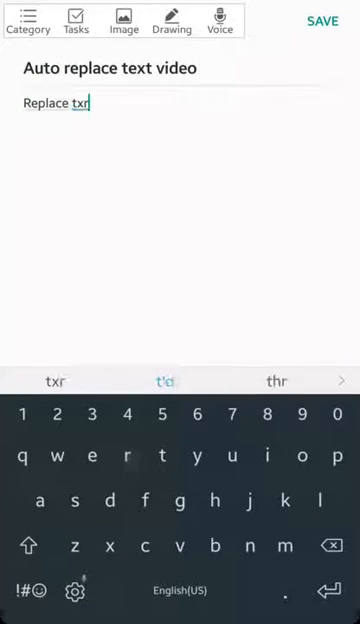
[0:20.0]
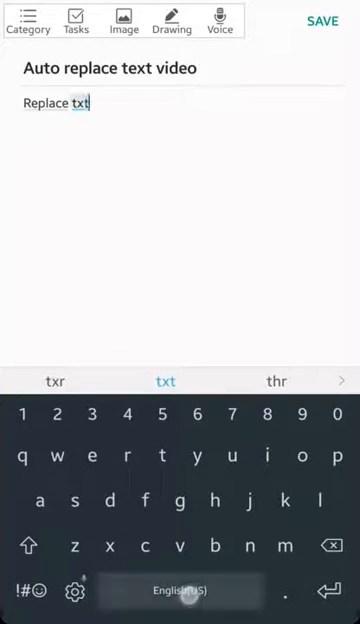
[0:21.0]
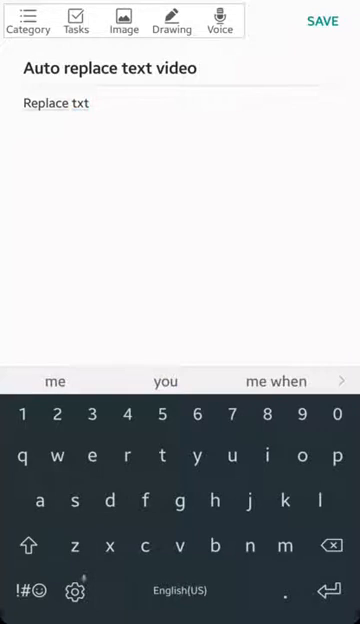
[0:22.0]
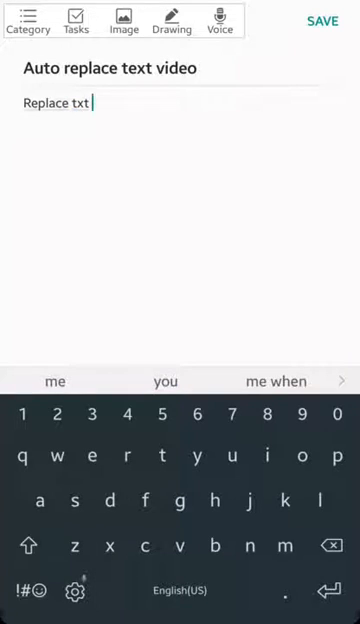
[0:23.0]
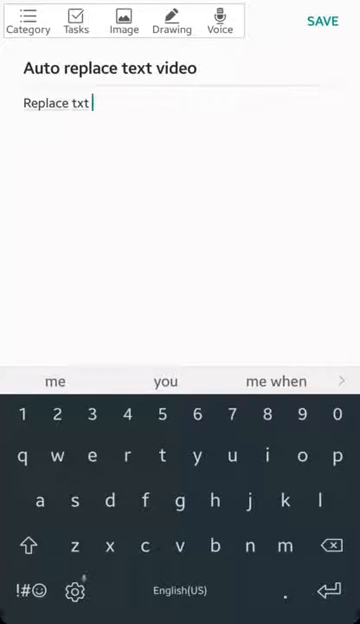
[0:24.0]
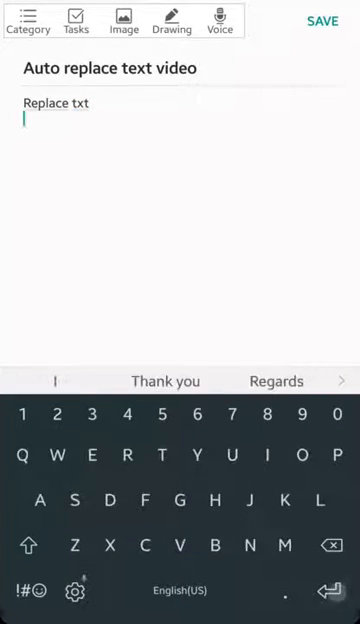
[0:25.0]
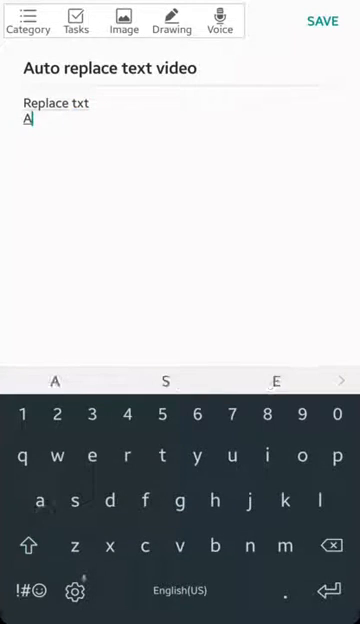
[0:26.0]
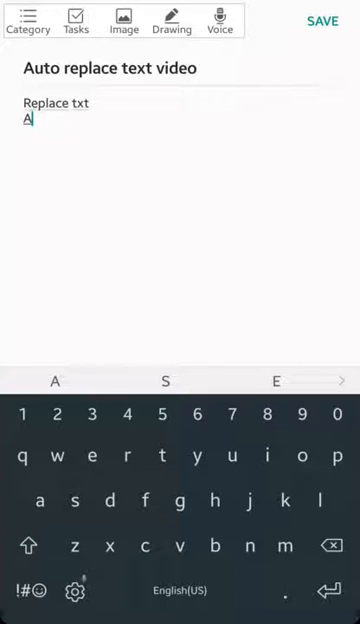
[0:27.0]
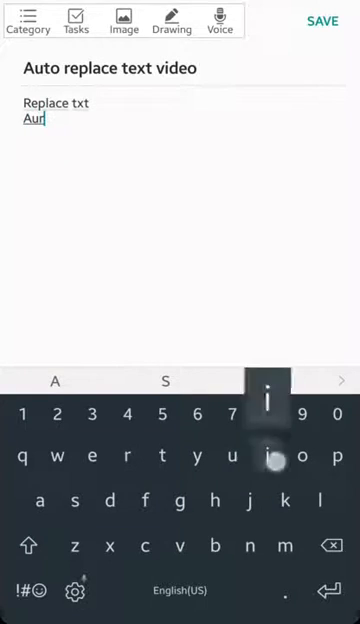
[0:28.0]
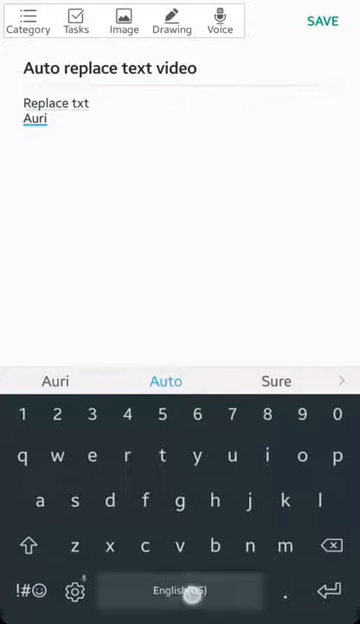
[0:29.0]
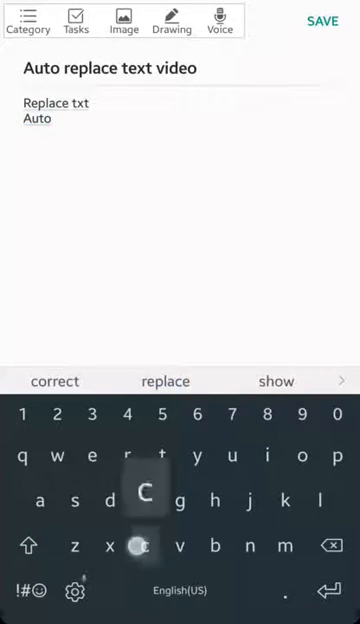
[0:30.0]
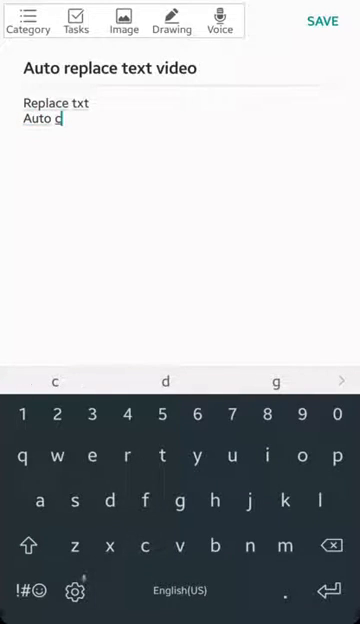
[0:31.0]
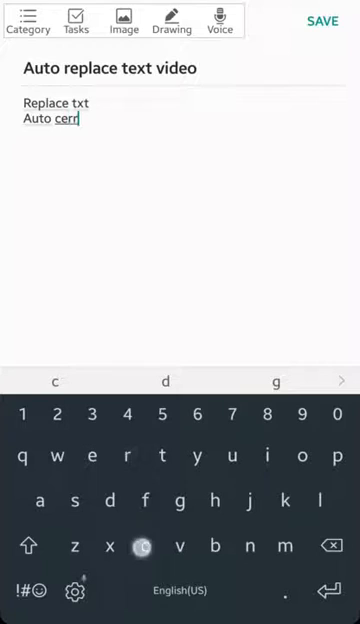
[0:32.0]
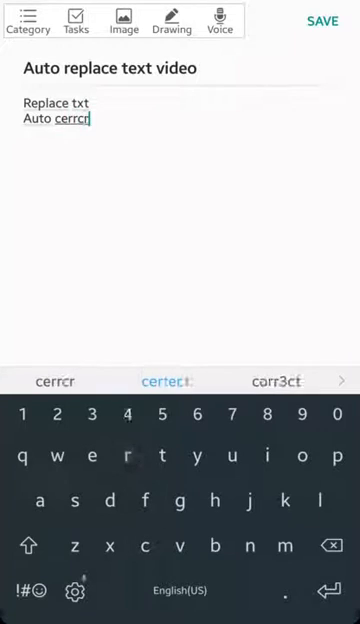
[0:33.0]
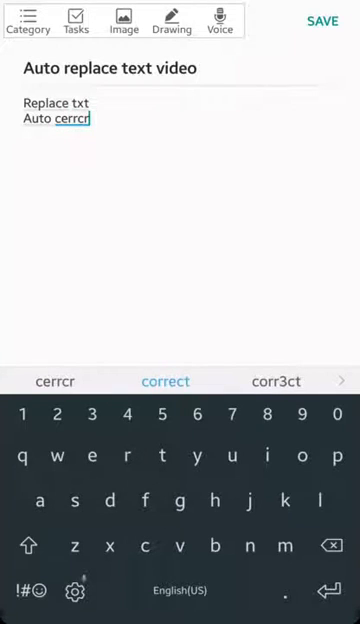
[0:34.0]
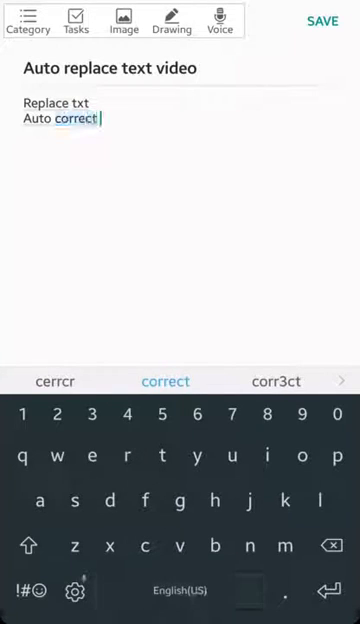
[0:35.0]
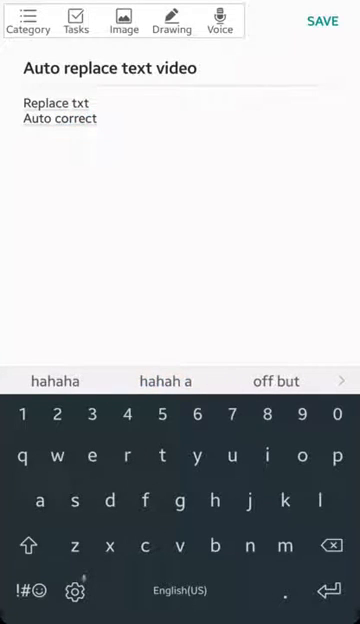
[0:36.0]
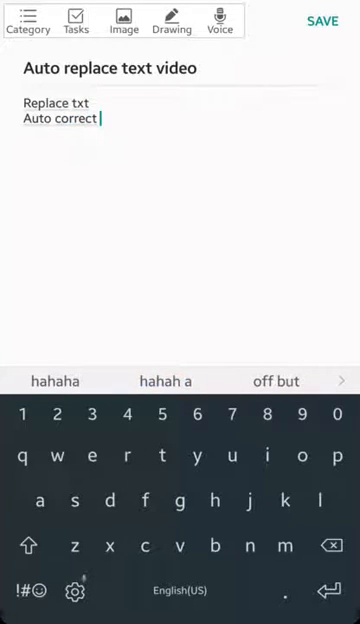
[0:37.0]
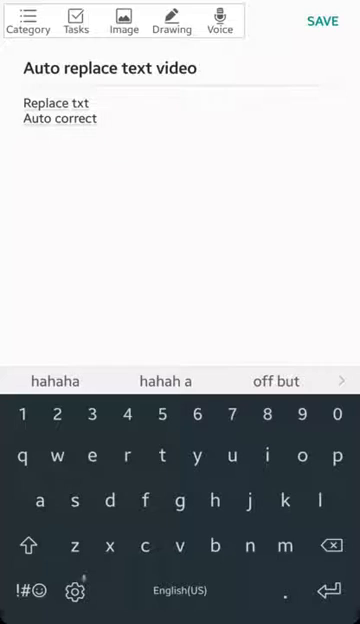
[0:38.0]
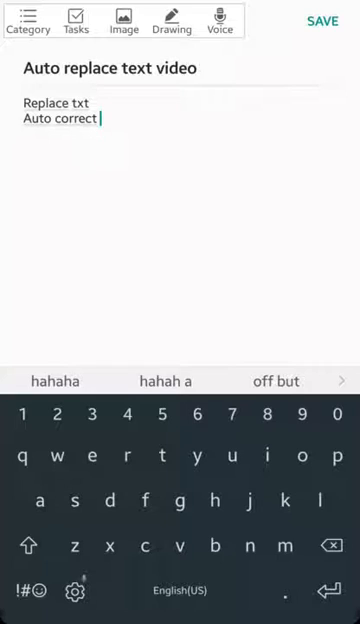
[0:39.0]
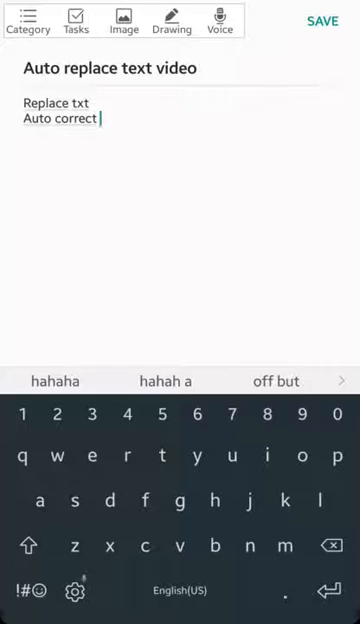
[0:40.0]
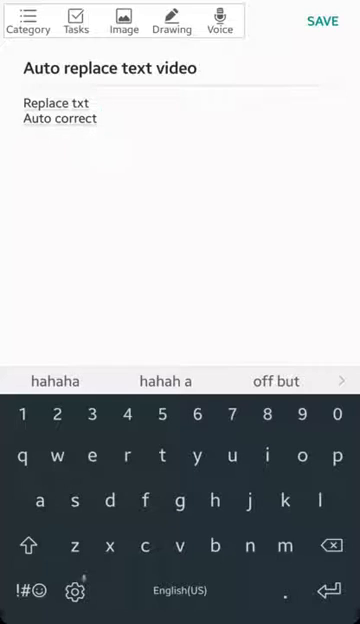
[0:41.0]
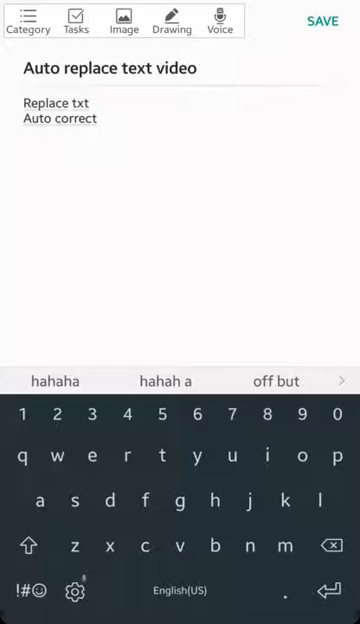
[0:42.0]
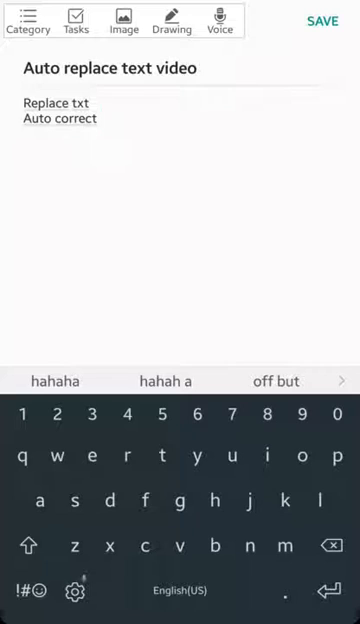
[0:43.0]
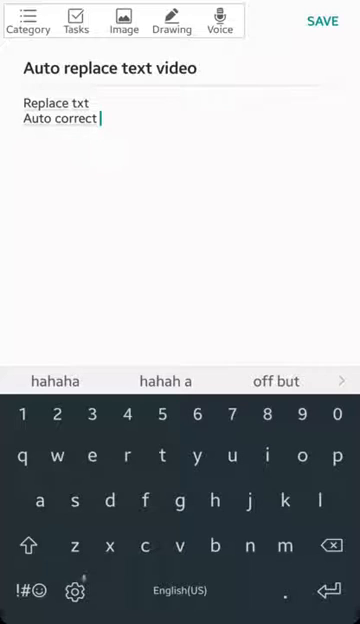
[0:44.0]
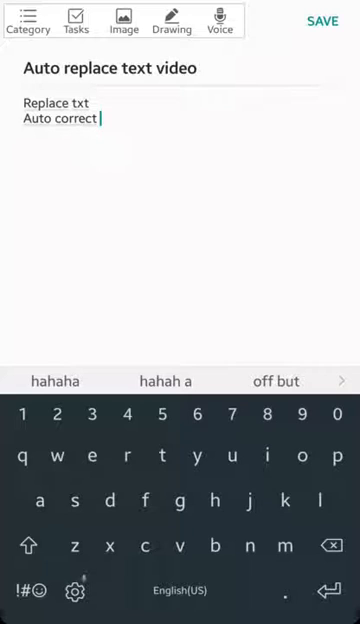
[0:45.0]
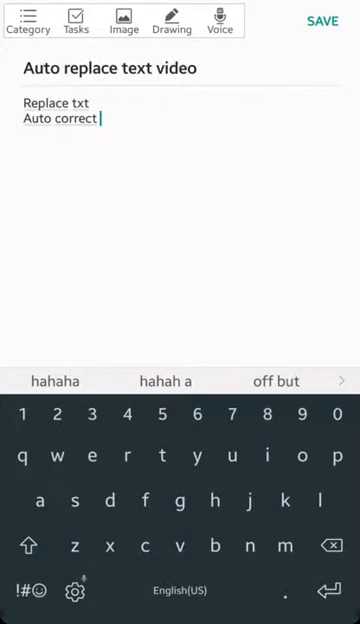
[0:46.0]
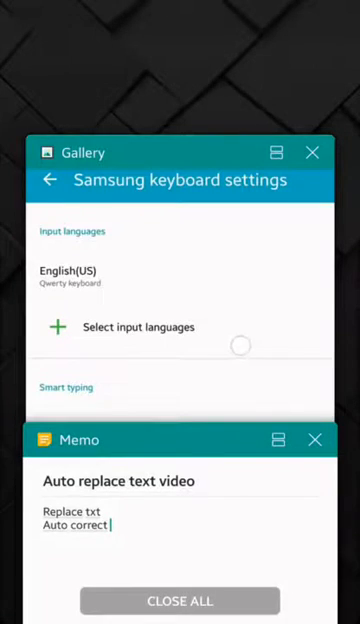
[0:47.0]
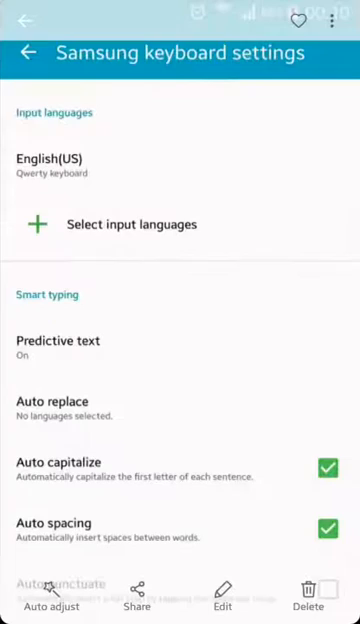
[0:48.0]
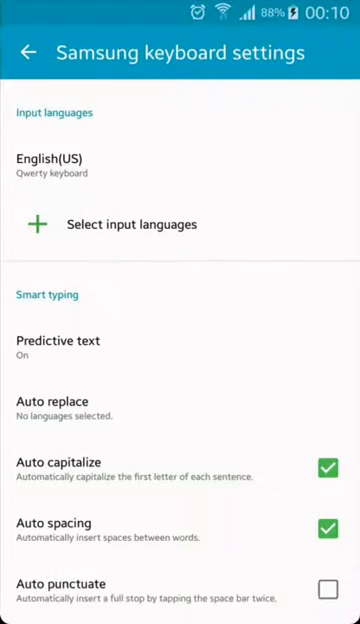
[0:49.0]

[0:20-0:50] The user is still on the same screen, where the field reads "replace TXT." The user moves down to the second line below it and types "auto-correct," and the cursor stays after the word "correct." The phone keyboard is at the bottom of the screen. Five tabs run across the top of the app, from left to right: "Category," "Tasks," "Image," "Drawing," and "Voice." The entire field is white, and text suggestions appear in the middle: the left and middle ones say "ha ha ha ha," and the right one shows two words, "off" and "but."